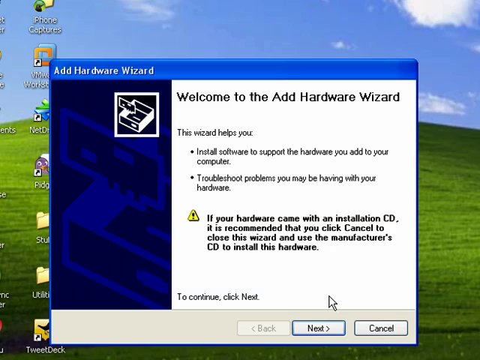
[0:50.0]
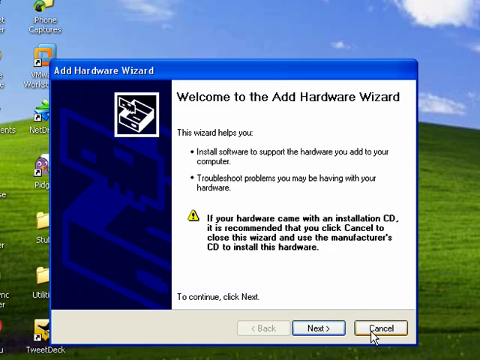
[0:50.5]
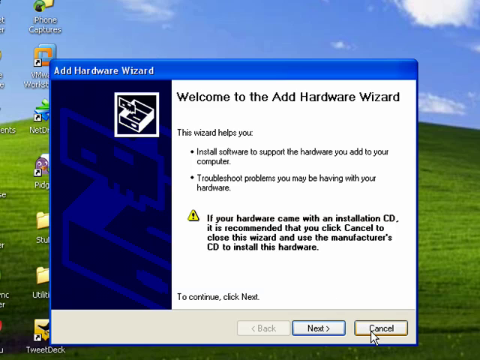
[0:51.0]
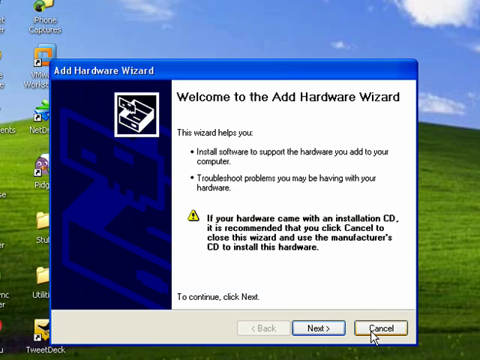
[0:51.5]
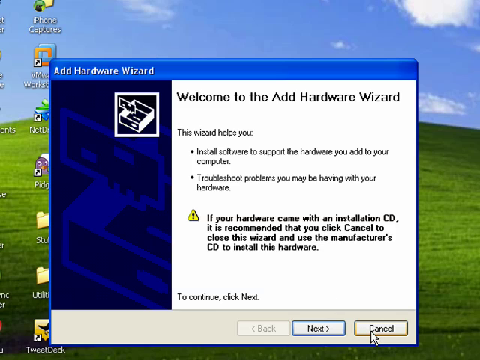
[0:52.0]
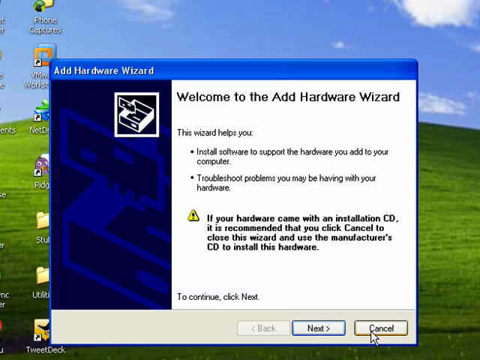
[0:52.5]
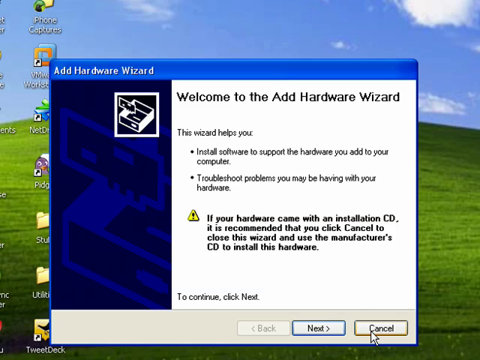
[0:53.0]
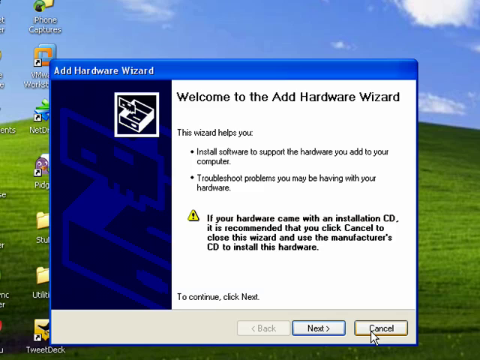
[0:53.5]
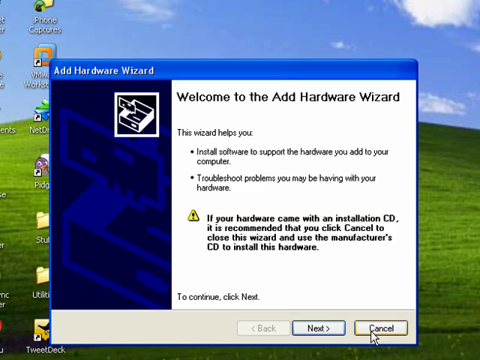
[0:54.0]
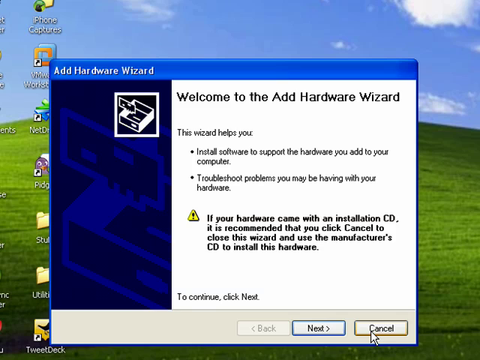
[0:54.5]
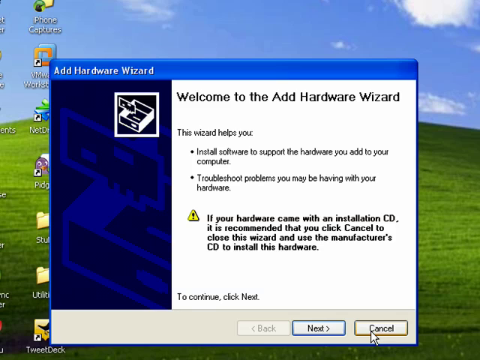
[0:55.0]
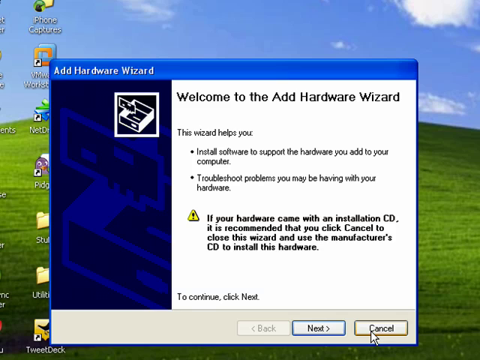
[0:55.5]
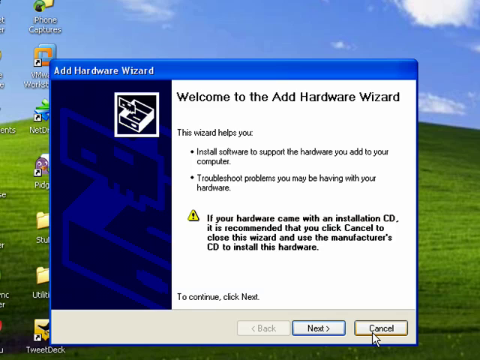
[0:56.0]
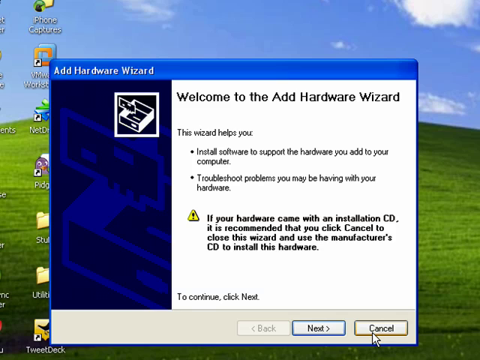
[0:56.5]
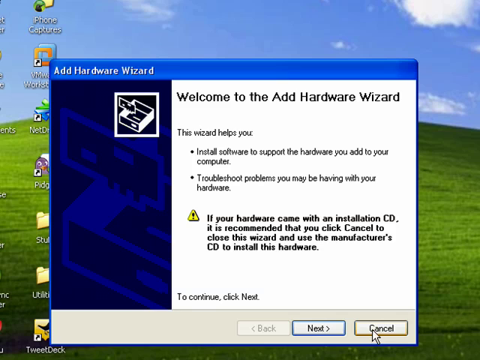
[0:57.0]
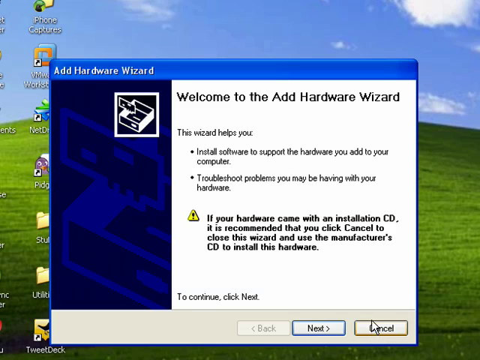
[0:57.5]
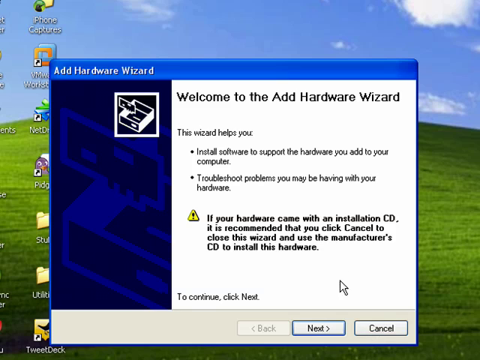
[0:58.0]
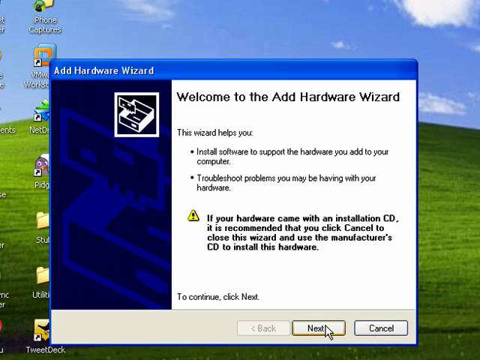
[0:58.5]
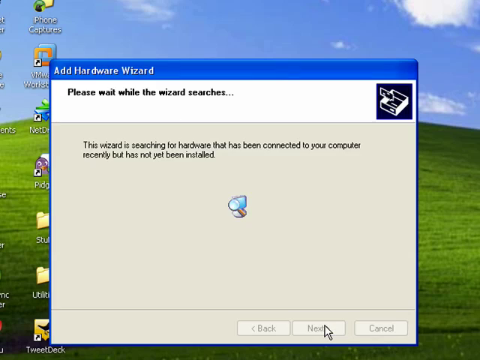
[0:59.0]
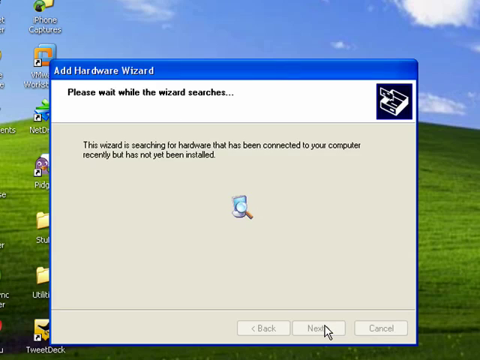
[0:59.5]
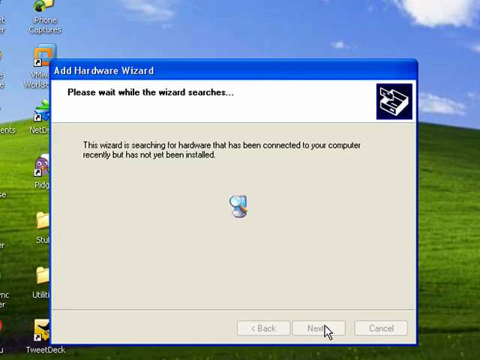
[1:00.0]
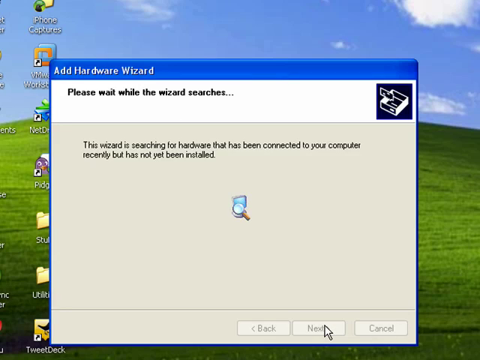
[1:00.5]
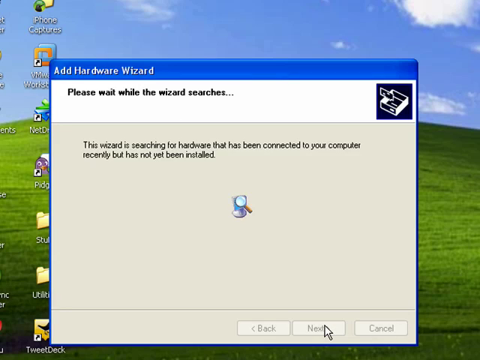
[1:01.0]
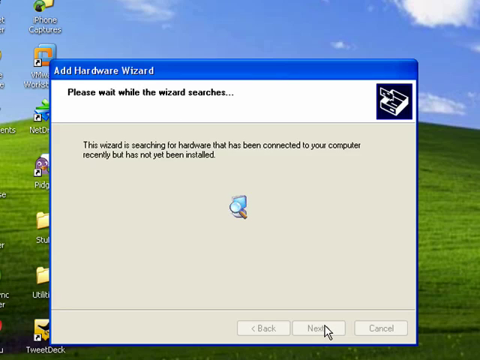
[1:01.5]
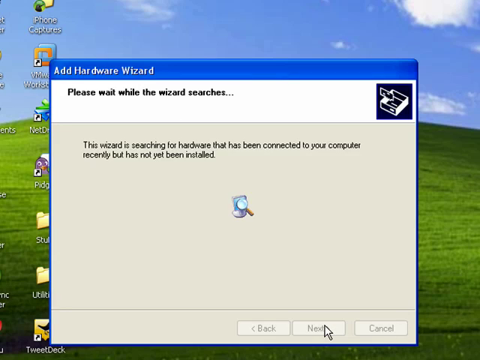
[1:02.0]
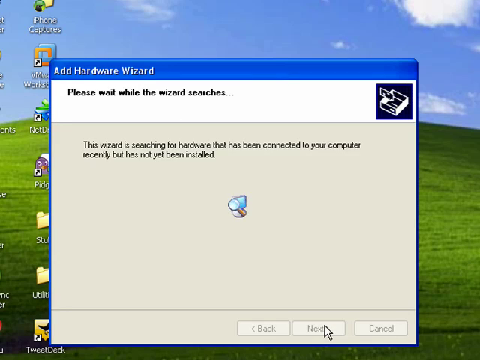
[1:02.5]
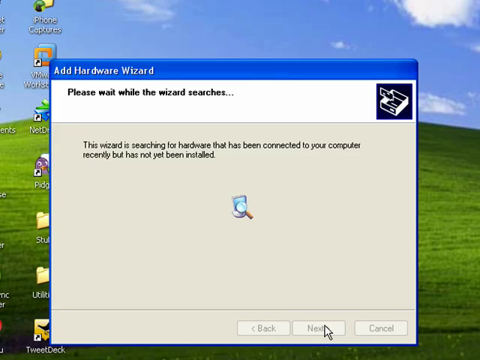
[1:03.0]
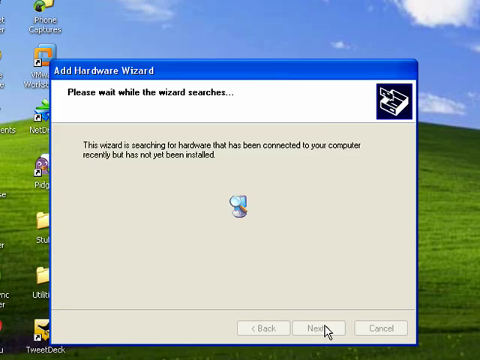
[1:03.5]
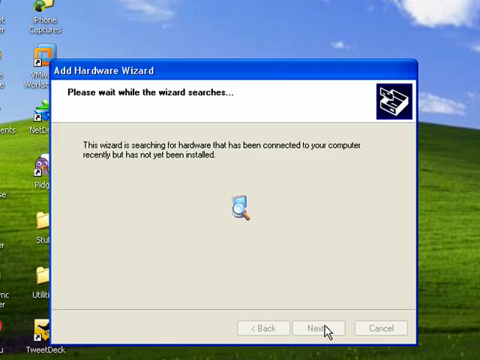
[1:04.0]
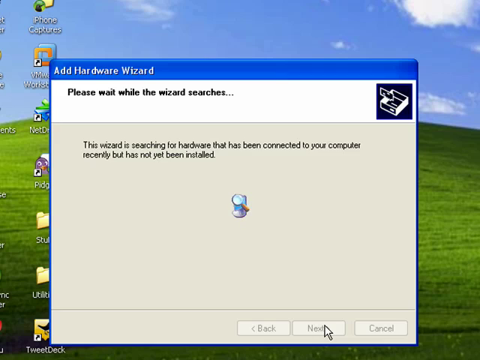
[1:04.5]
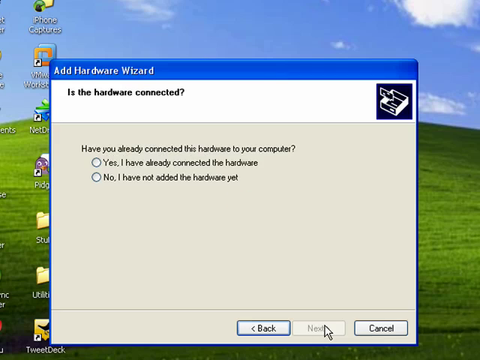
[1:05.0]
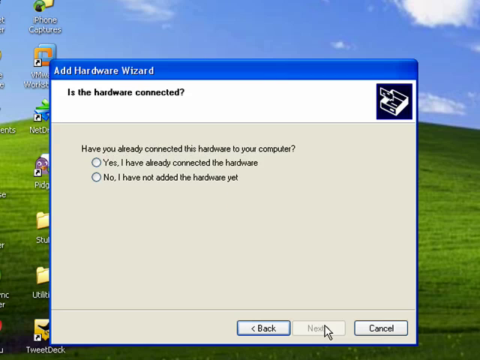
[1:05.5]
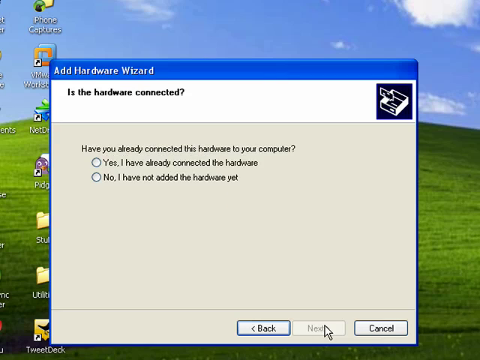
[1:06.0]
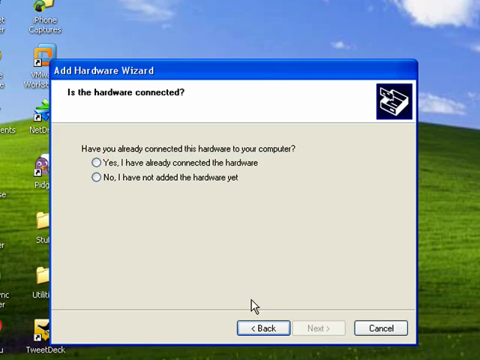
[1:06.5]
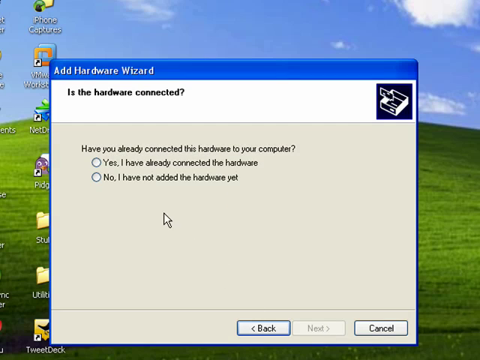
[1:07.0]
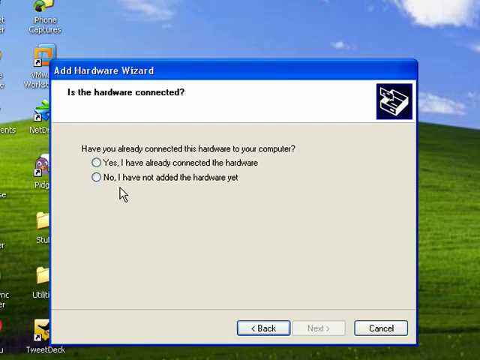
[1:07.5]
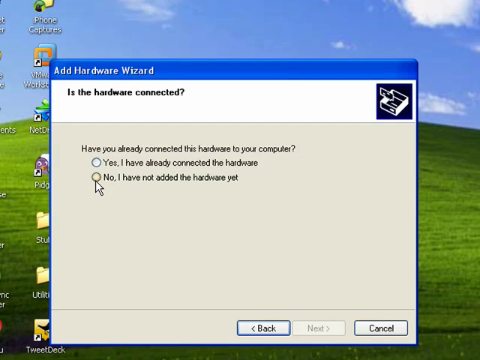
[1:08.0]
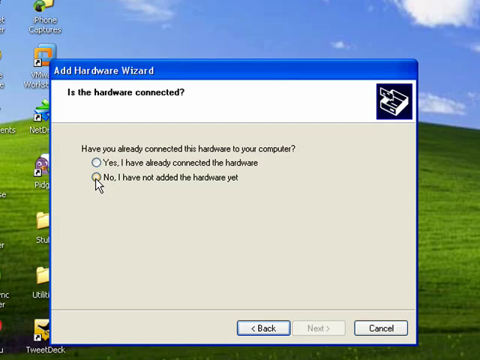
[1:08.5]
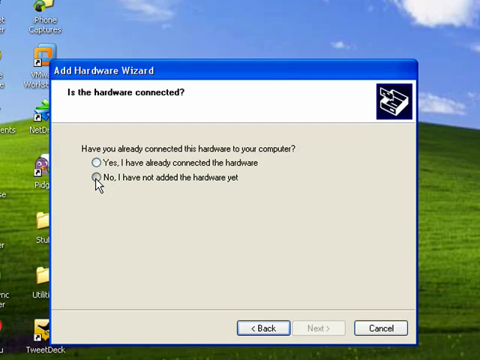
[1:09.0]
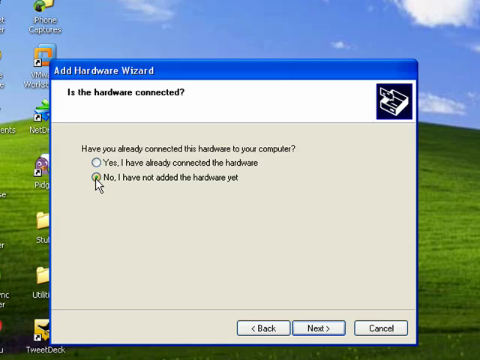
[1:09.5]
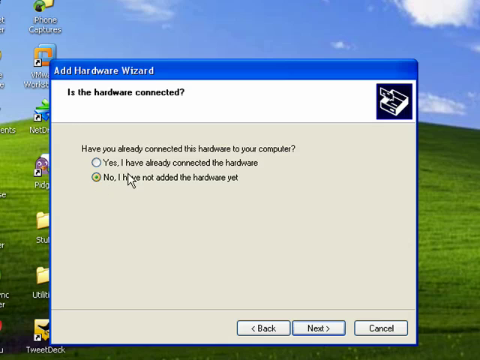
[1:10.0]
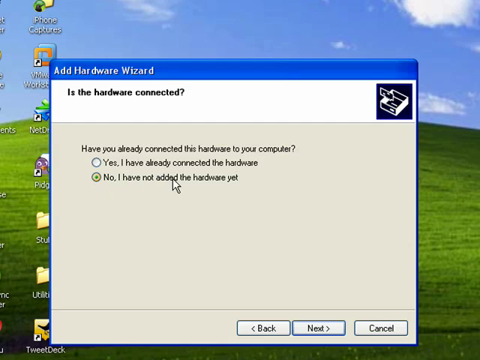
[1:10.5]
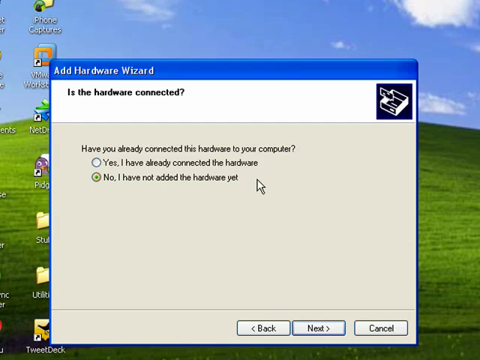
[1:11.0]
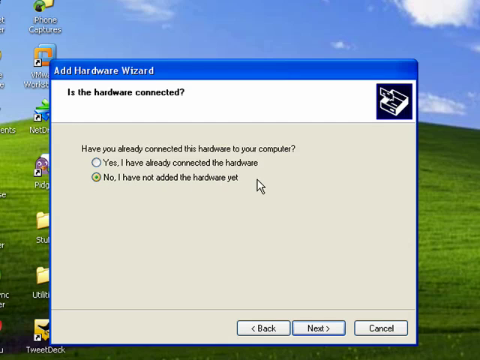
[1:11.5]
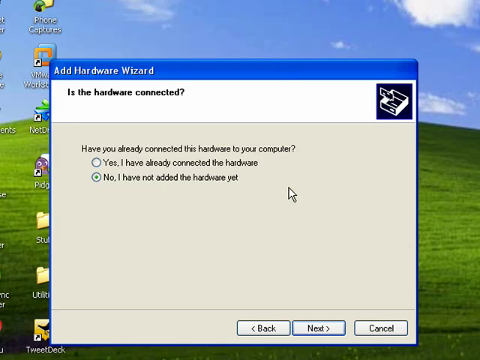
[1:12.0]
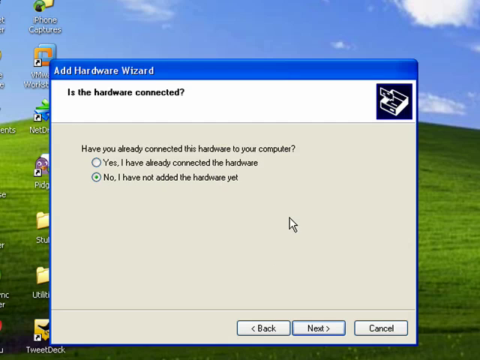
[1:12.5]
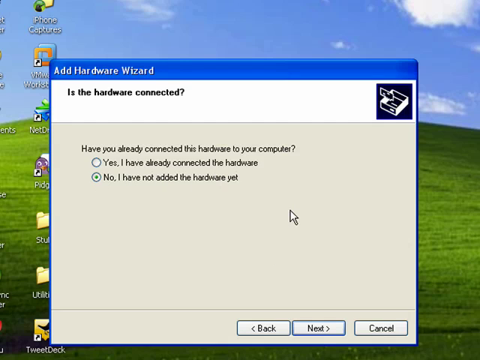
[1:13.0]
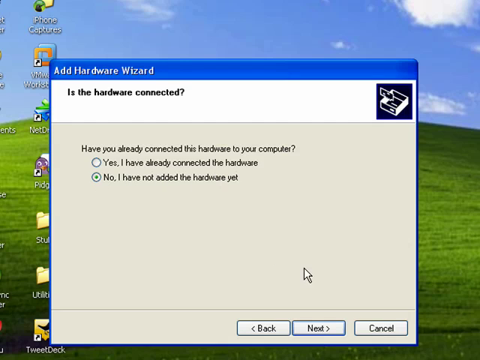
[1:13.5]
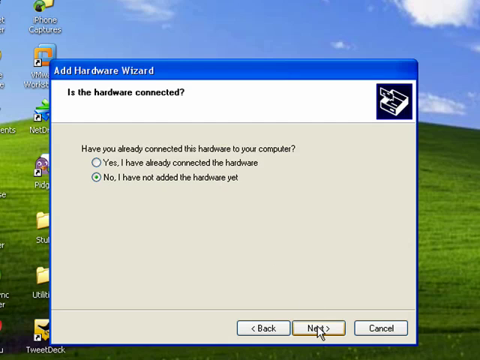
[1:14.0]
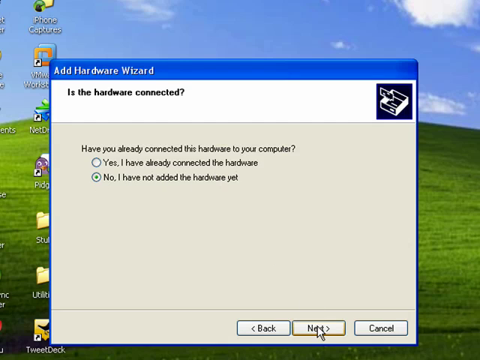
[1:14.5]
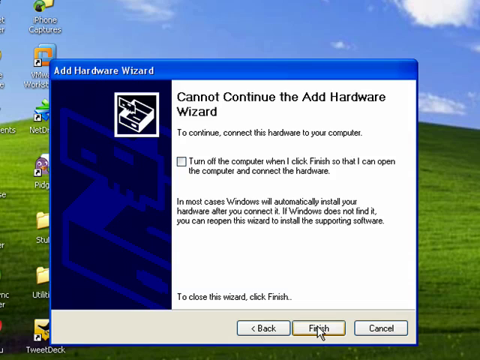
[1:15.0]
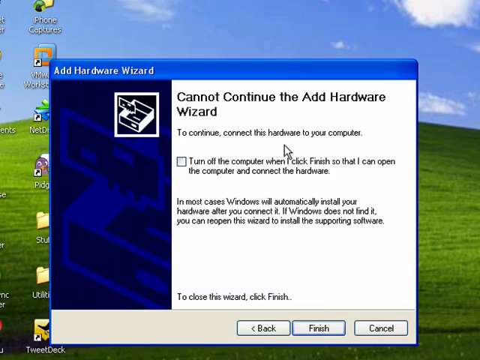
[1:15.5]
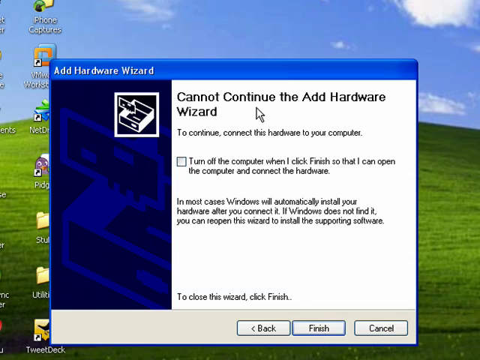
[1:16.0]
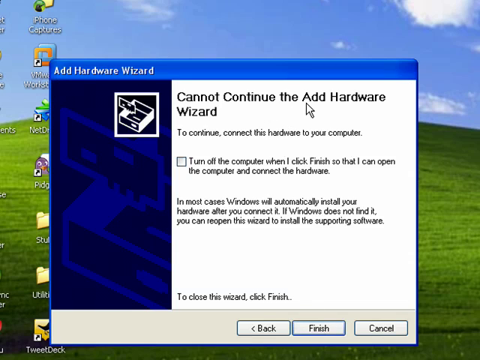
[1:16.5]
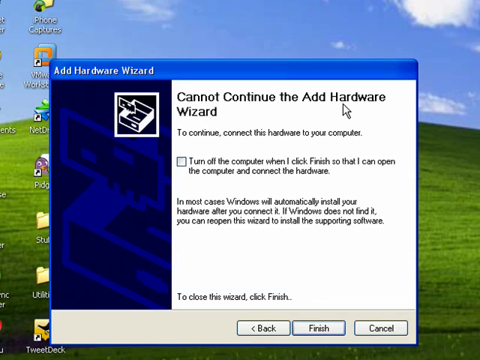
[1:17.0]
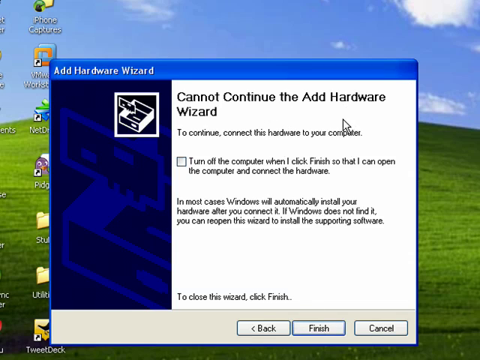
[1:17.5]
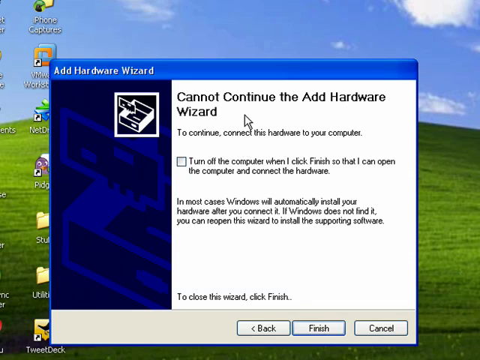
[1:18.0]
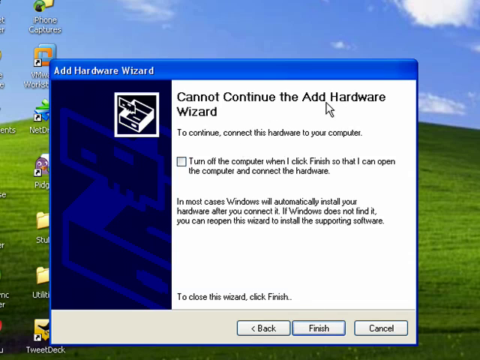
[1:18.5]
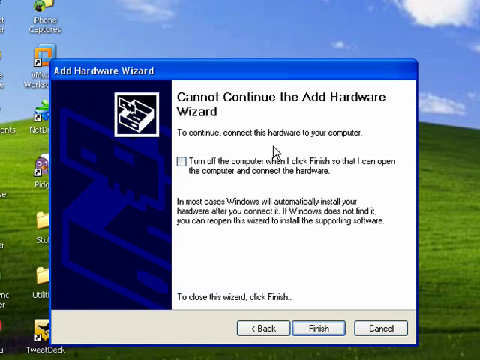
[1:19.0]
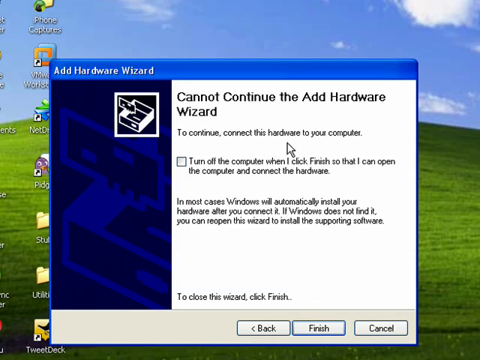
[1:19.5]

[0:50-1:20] A web page shows a big green hill and a blue sky with a lot of clouds. A pop-up appears titled "Add Hardware Wizard," reading "Welcome to the Add Hardware Wizard." The text says the wizard helps install software to support the hardware you add to your computer and troubleshoot problems you may be having with your hardware. In bold print there is a yellow yield or trouble sign, with the text "If your hardware came with an installation CD it is recommended that you click cancel to close this wizard and use a manufacturer CD to install this hardware." It says "to continue click next." A cancel button is next to the next button at the very bottom on the right-hand side of the pop-up. The pop-up is navy blue and black on one side with a design, and has an inset box outlined in white with a picture in it. It then says "please wait while the wizard searches." Next comes "Is the hardware connected?" with the question "Have you already connected the hardware to your computer," and someone selects "No, I have not added the hardware yet." A pop-up says "cannot continue the Add Hardware Wizard." The cursor moves to an option to turn off the computer, and they click on it.